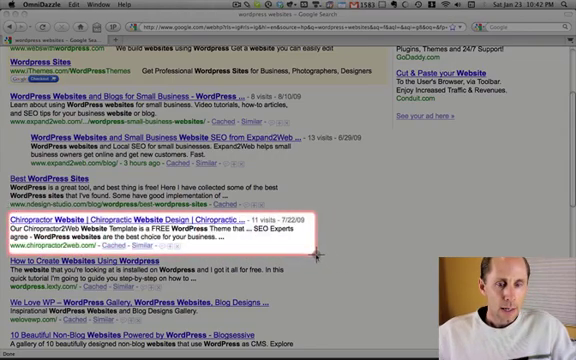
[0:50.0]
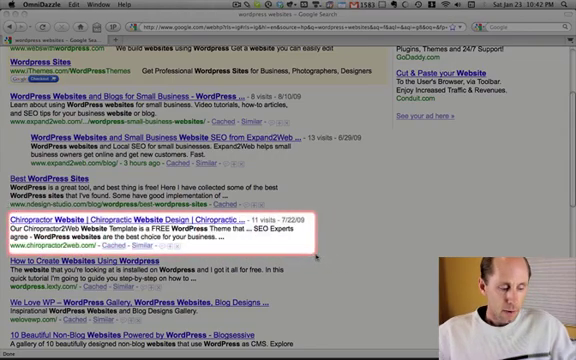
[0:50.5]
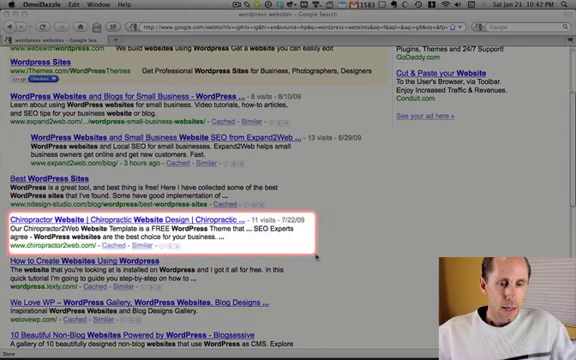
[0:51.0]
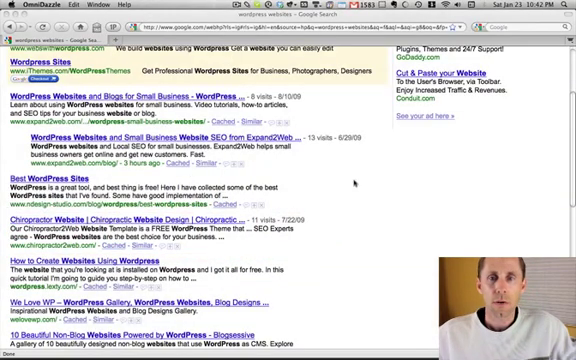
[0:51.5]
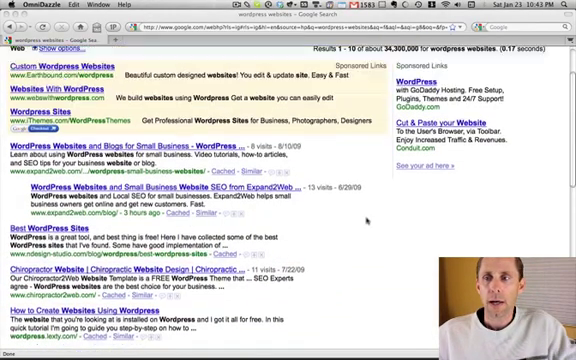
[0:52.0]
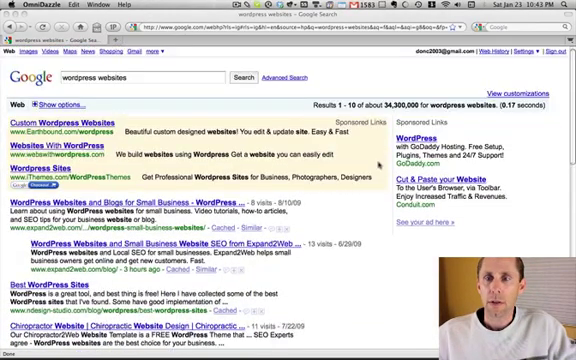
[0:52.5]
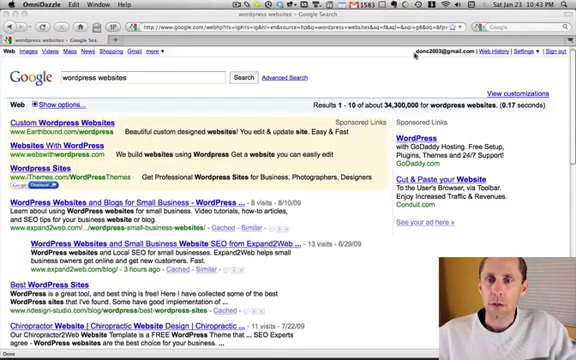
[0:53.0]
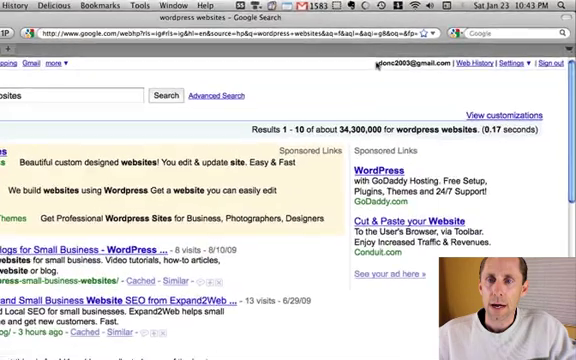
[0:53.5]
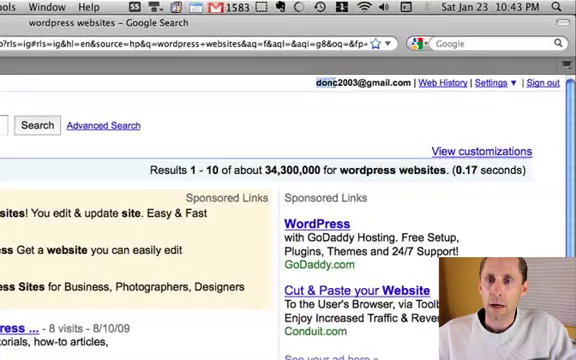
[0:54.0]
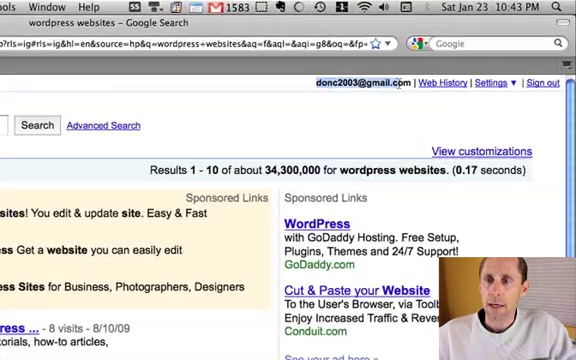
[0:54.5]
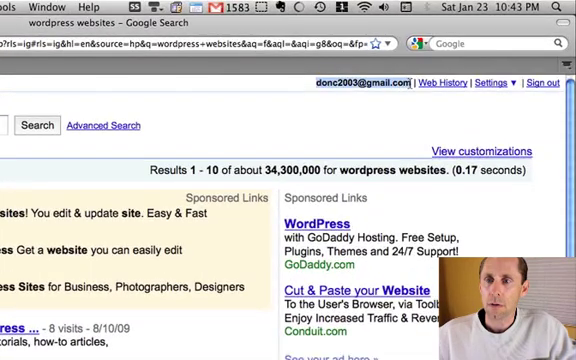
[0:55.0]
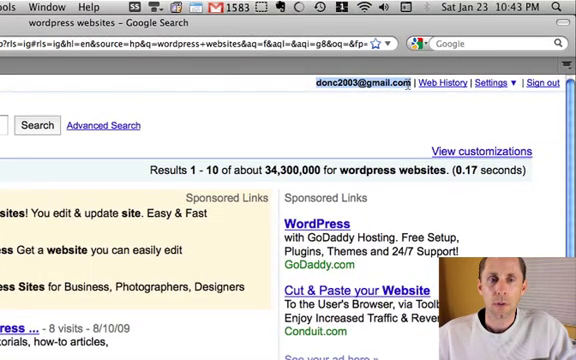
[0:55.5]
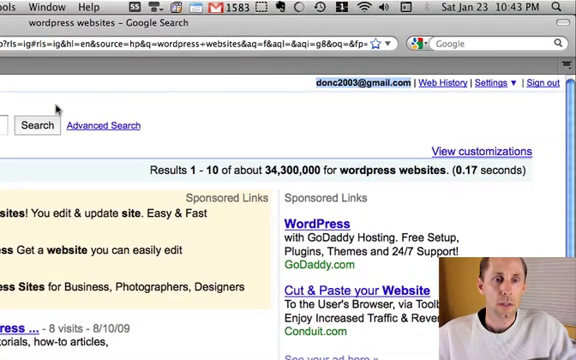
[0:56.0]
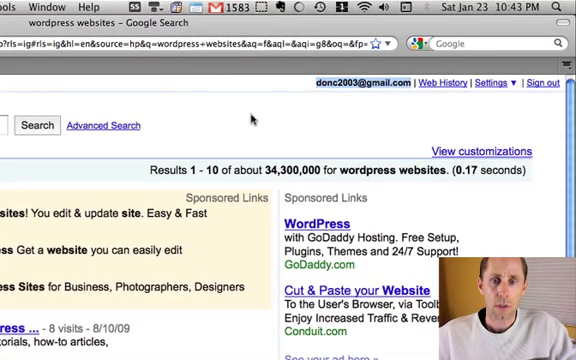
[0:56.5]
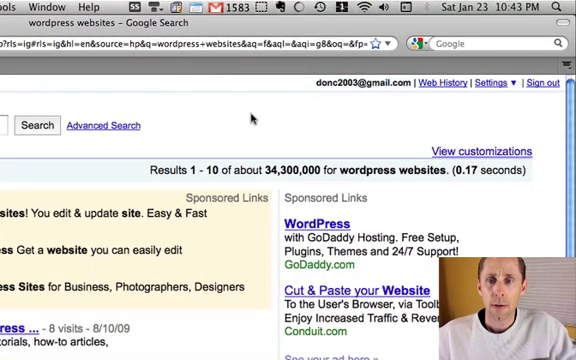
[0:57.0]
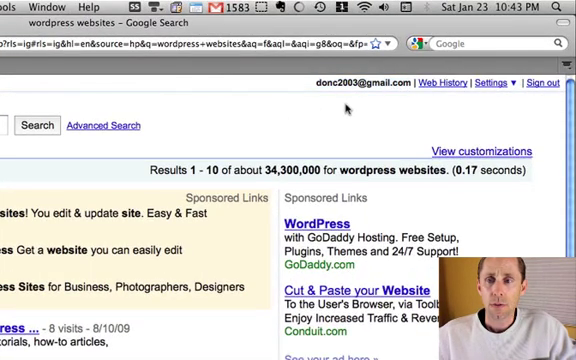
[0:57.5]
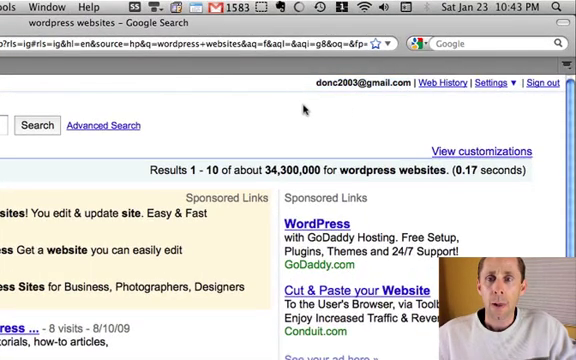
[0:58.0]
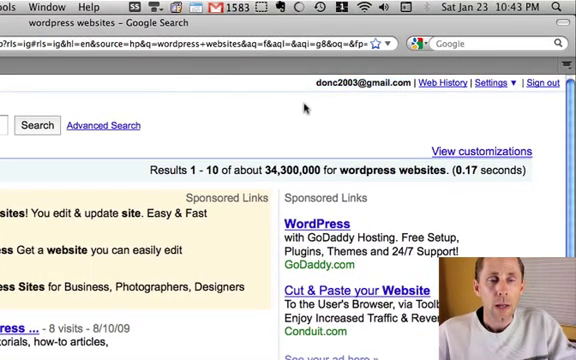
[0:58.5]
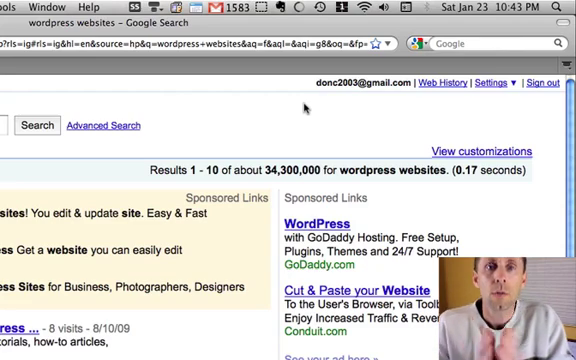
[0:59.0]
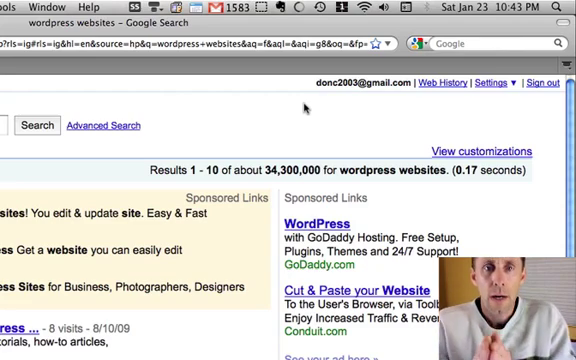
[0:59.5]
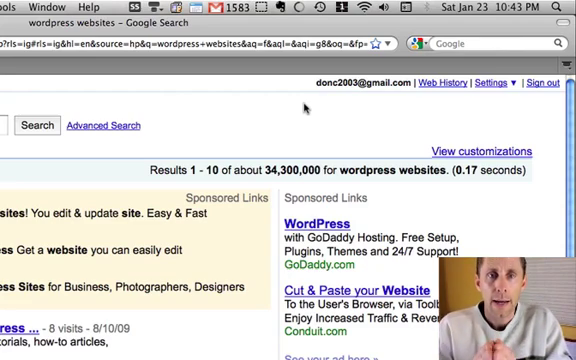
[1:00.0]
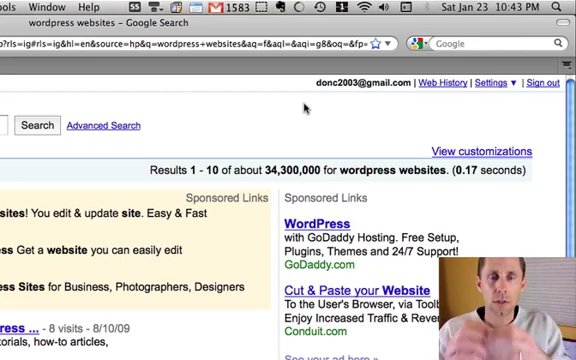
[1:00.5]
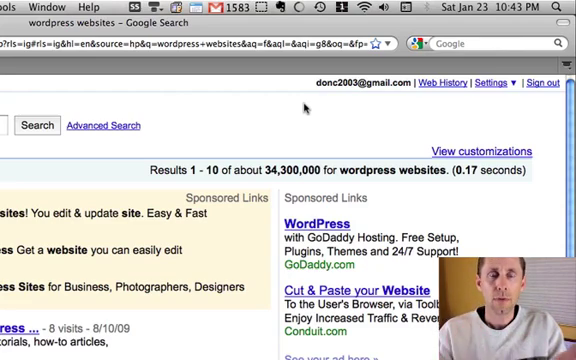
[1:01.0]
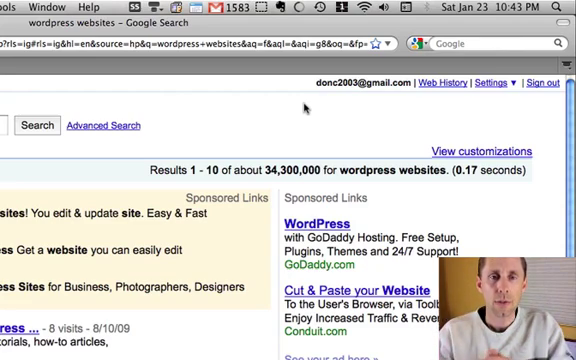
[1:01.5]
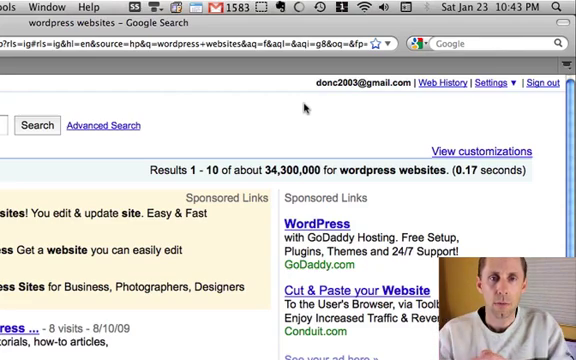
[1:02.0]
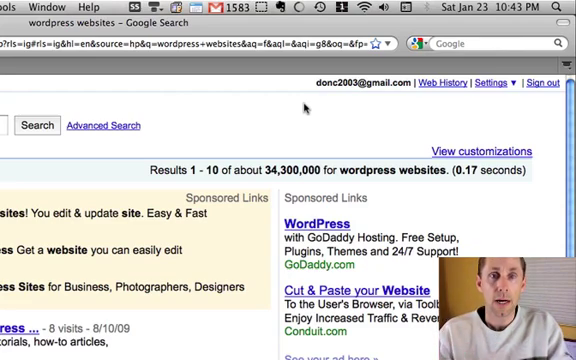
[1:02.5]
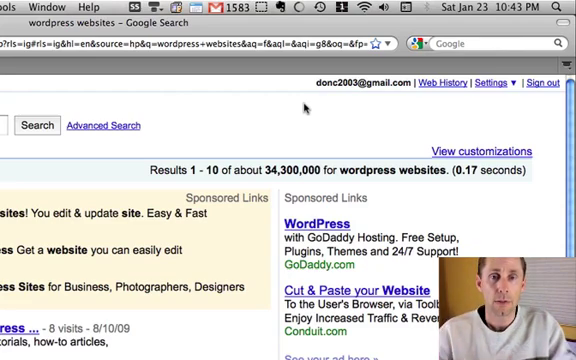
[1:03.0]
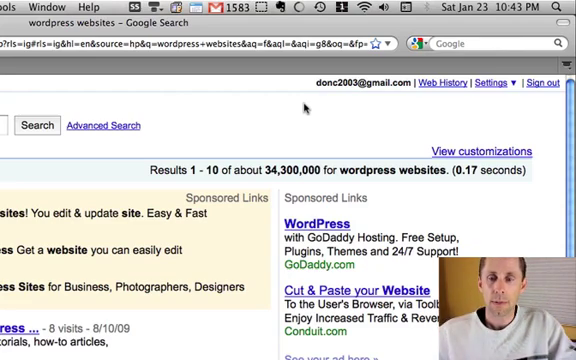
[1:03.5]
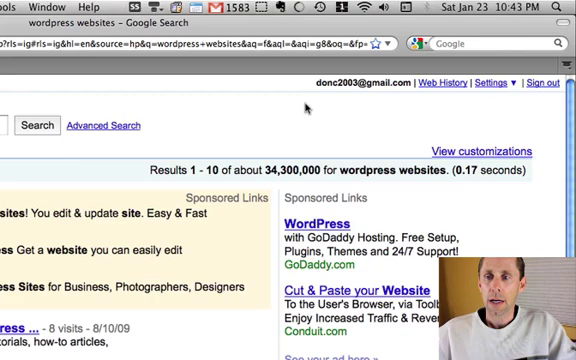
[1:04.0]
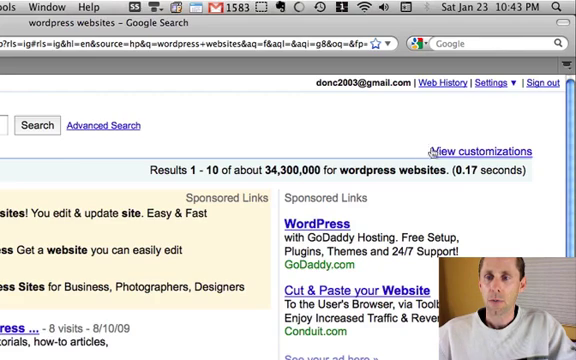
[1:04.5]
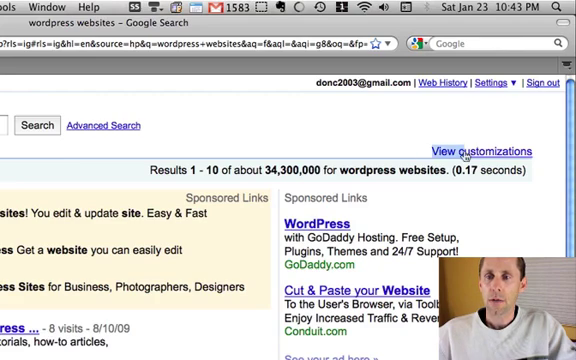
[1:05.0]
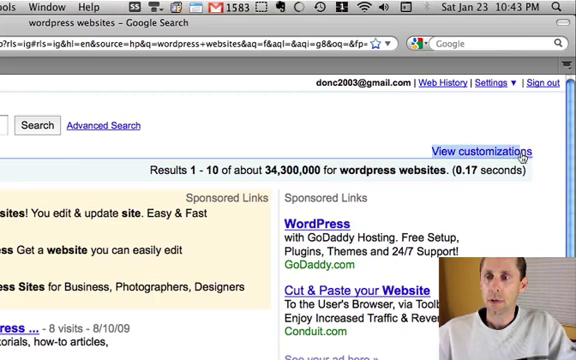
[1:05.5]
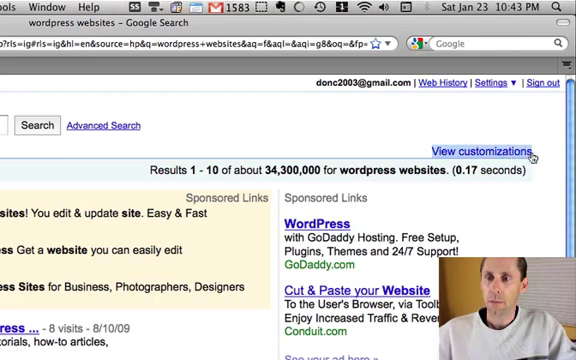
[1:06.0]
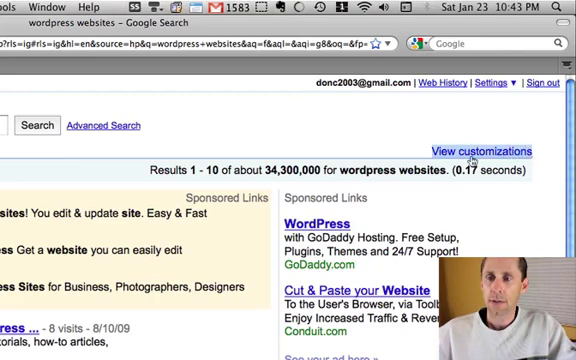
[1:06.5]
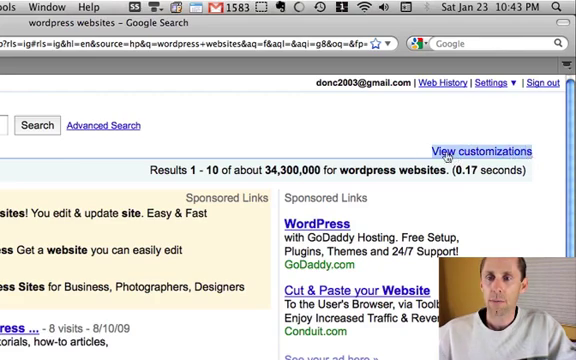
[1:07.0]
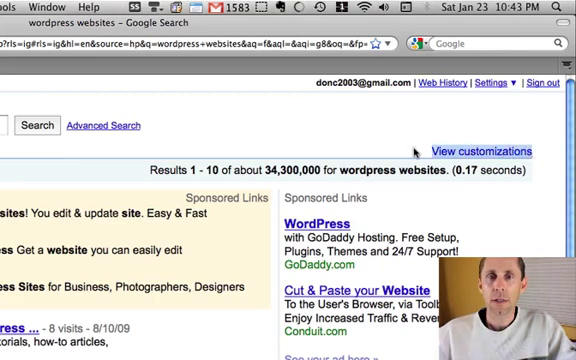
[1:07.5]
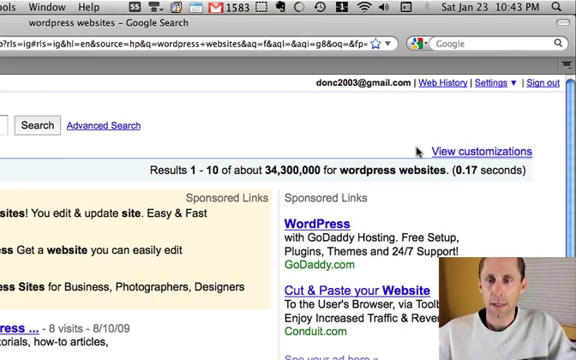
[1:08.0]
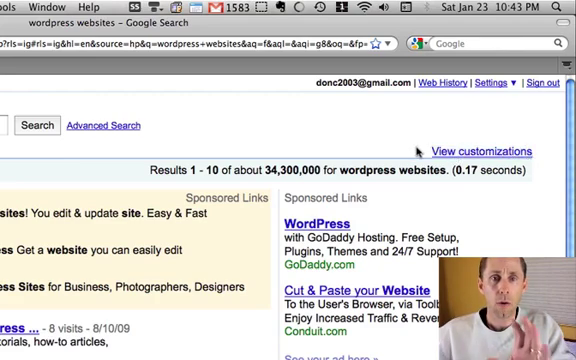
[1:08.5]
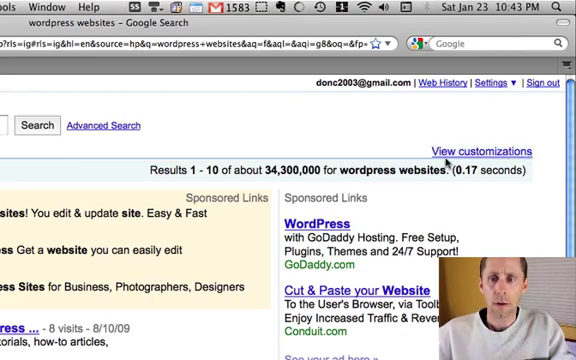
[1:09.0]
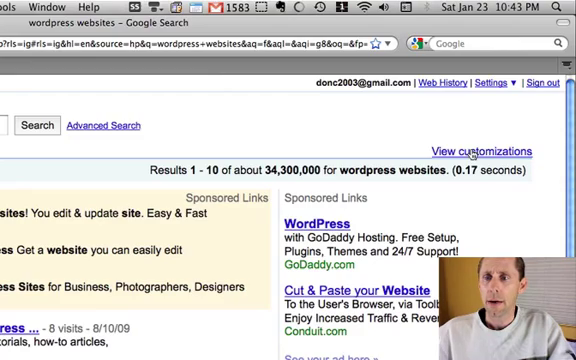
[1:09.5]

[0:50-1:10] The chiropractic web design search result is still highlighted as the man in the lower right-hand corner keeps speaking. He scrolls up and zooms in, showing that he is logged in to Google with his Gmail account, donc2003@gmail.com. The screen shows it is displaying 110 results of about 34,300,000, returned in about 0.17 seconds. He talks and makes hand gestures at the camera, and highlights a selection on the screen called "view customizations". In the sponsored links section, the very first one says "WordPress" but is an ad for godaddy.com. Along the top are other Google links: one for web history, a drop-down for settings, and a sign-out button. To the left is Advanced Search, next to the normal Google search button. The title displayed on the Firefox window is "WordPress websites - Google search".